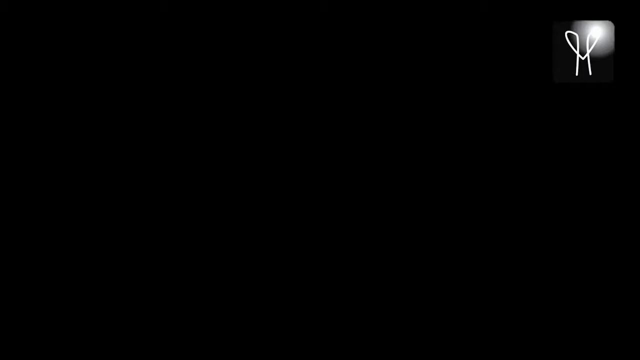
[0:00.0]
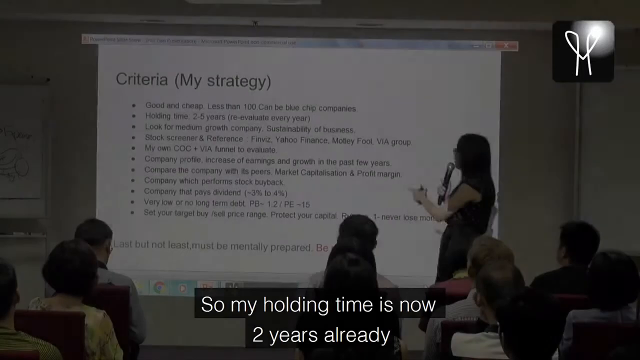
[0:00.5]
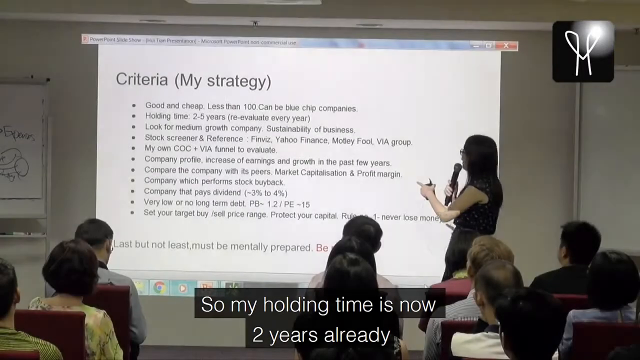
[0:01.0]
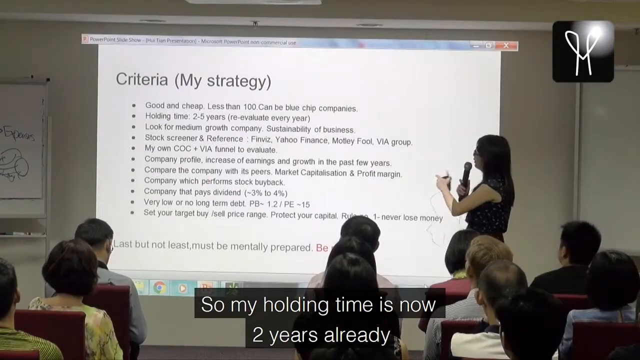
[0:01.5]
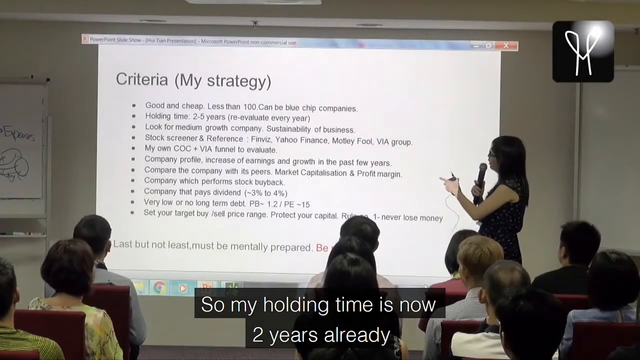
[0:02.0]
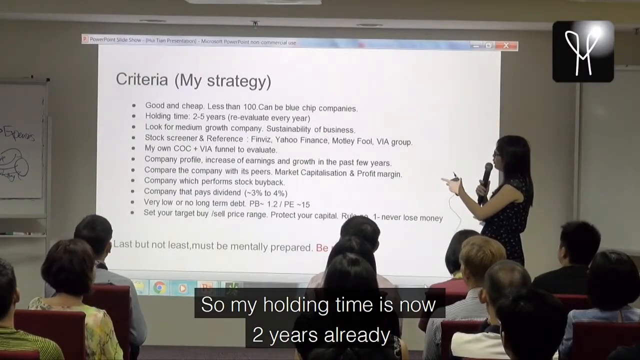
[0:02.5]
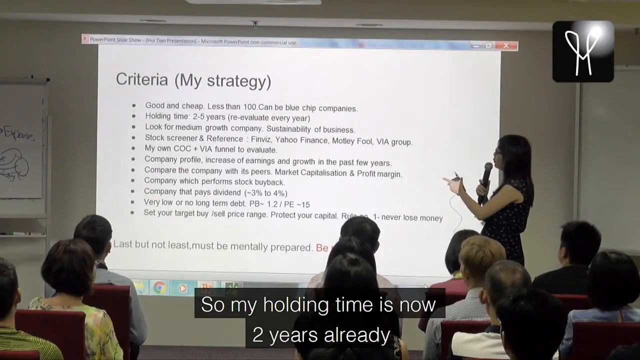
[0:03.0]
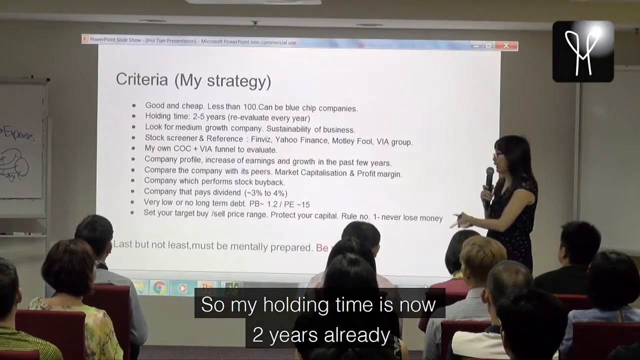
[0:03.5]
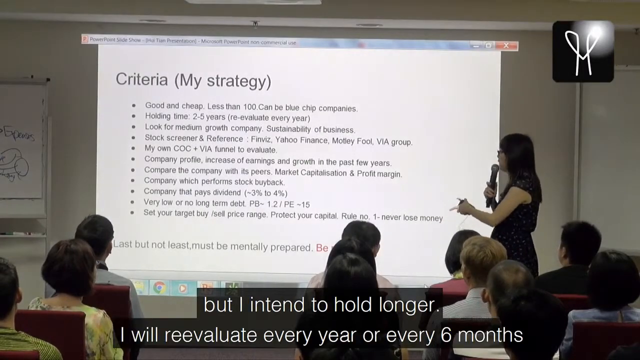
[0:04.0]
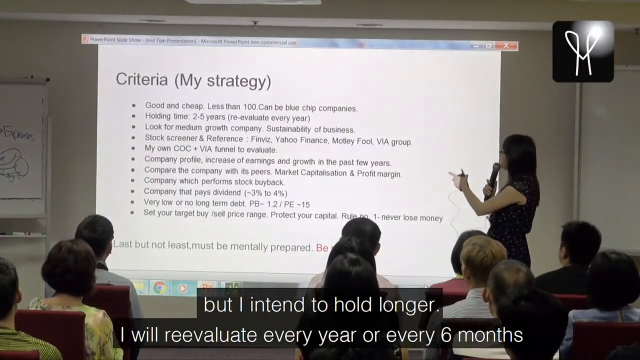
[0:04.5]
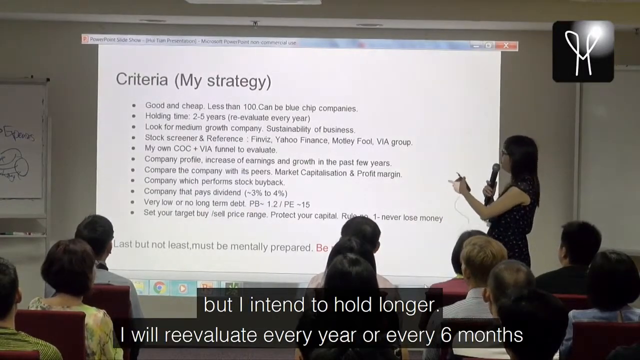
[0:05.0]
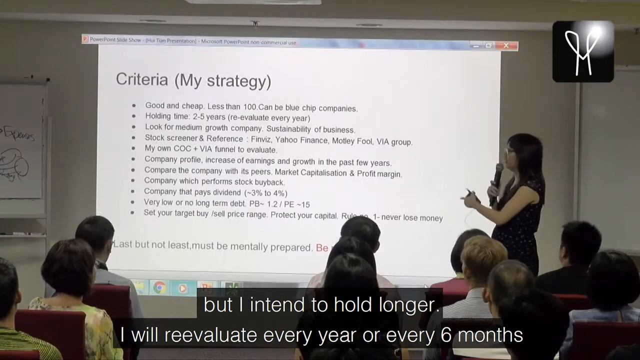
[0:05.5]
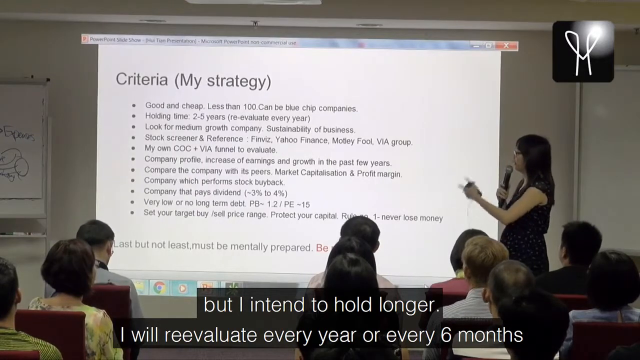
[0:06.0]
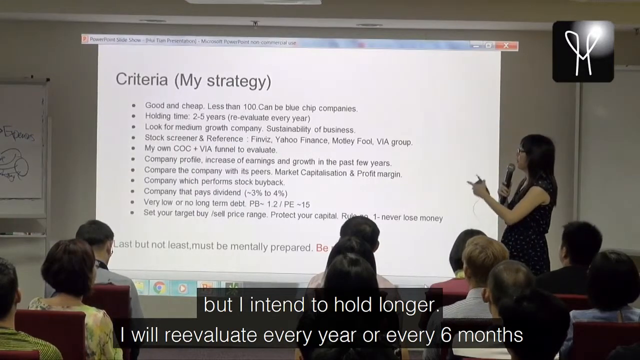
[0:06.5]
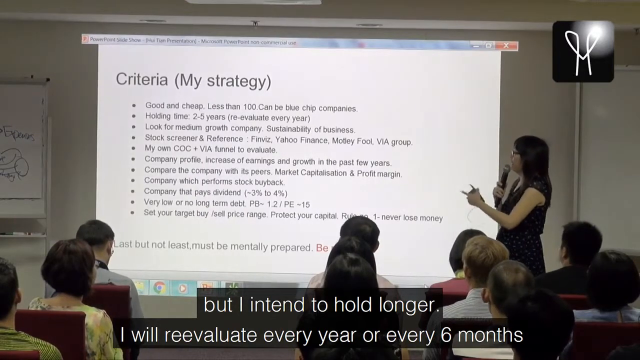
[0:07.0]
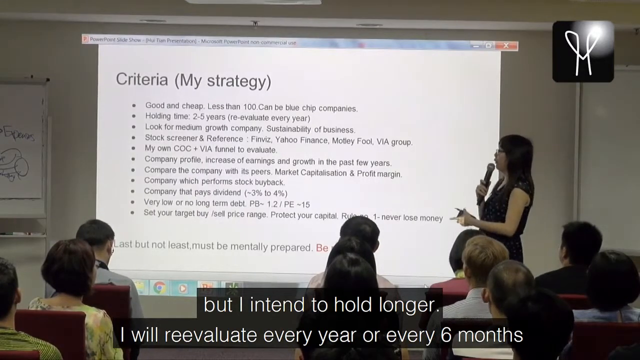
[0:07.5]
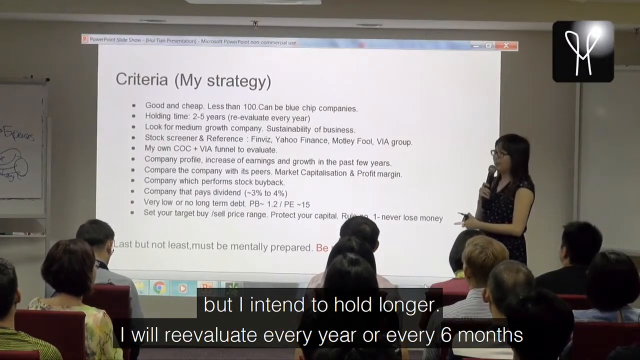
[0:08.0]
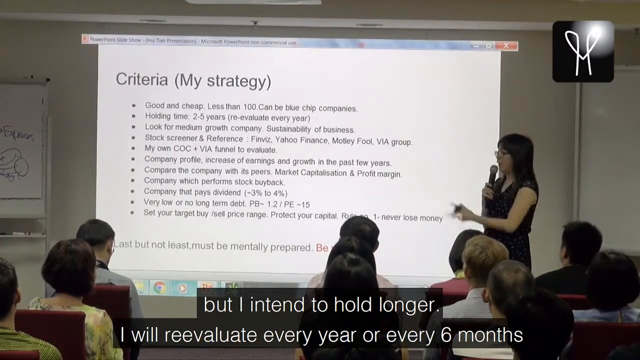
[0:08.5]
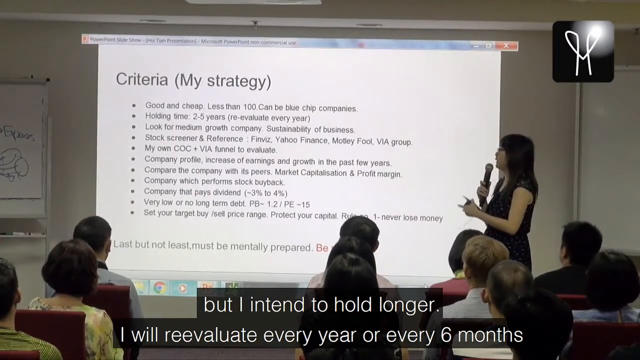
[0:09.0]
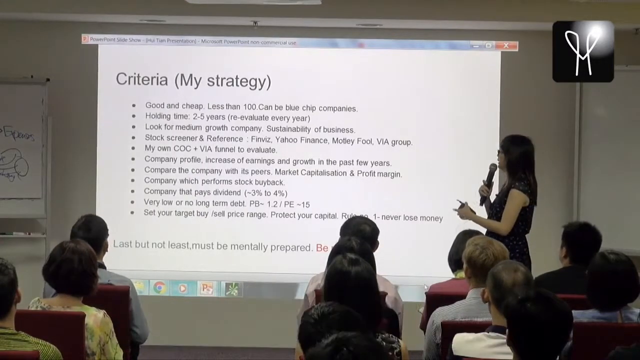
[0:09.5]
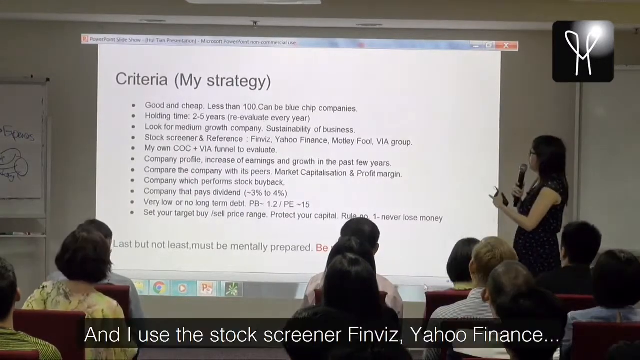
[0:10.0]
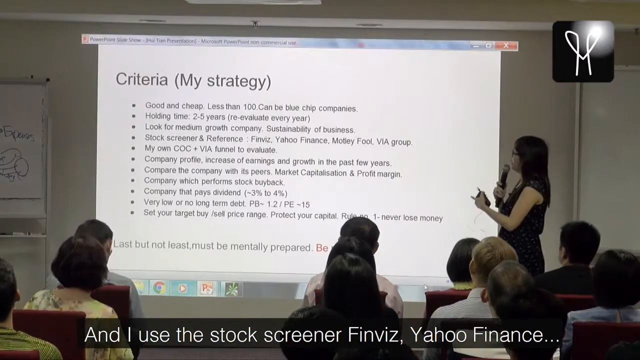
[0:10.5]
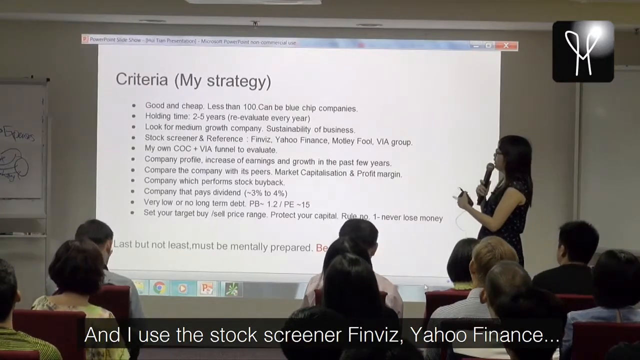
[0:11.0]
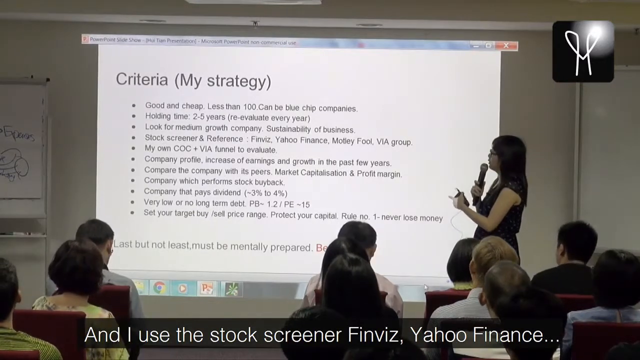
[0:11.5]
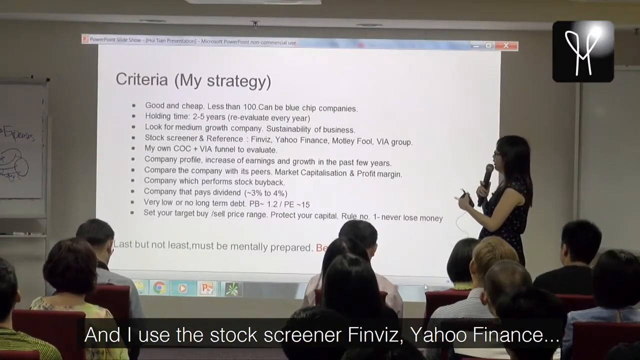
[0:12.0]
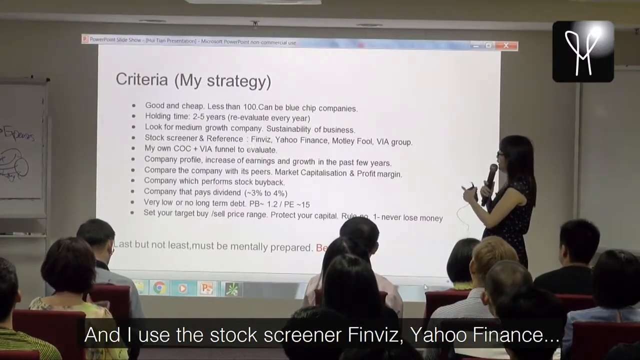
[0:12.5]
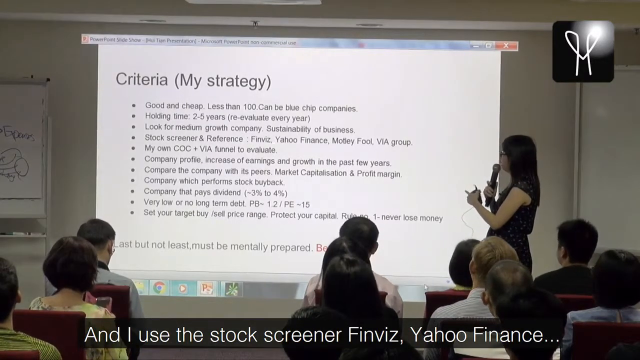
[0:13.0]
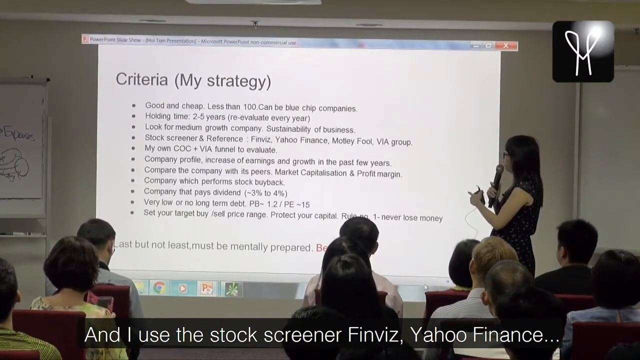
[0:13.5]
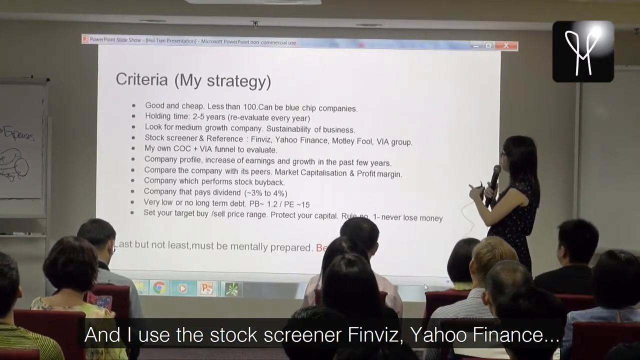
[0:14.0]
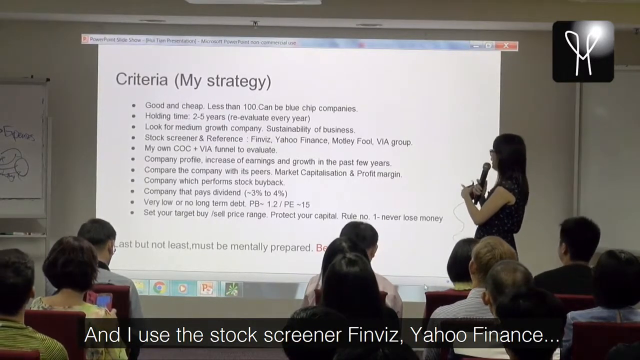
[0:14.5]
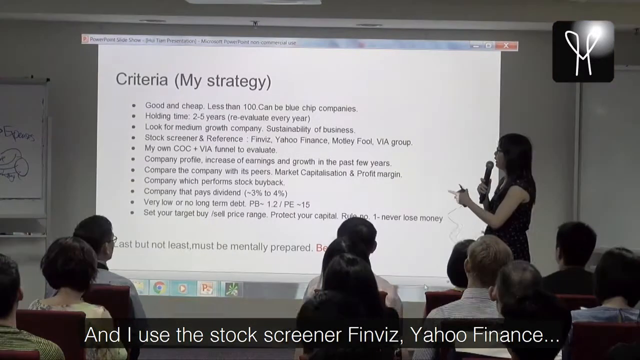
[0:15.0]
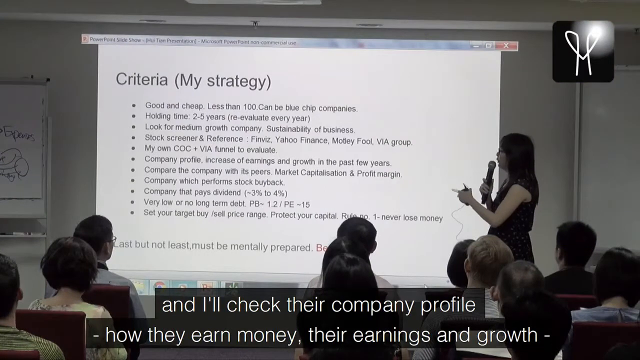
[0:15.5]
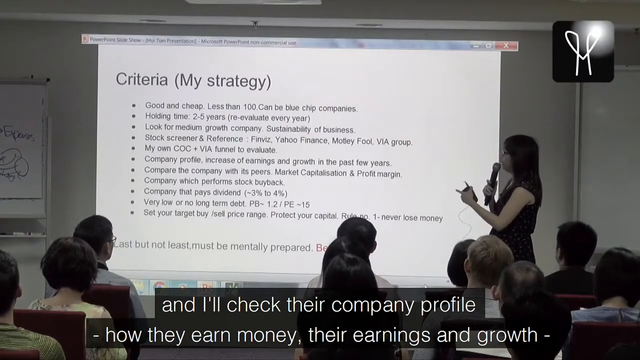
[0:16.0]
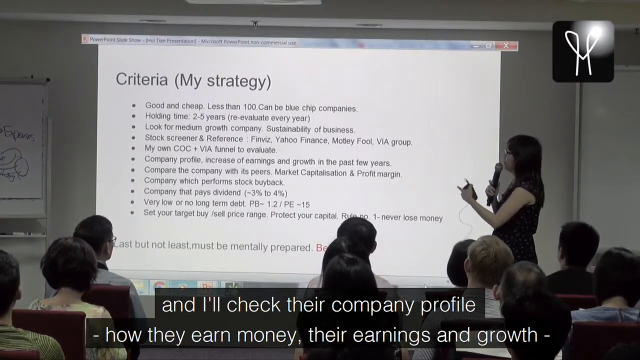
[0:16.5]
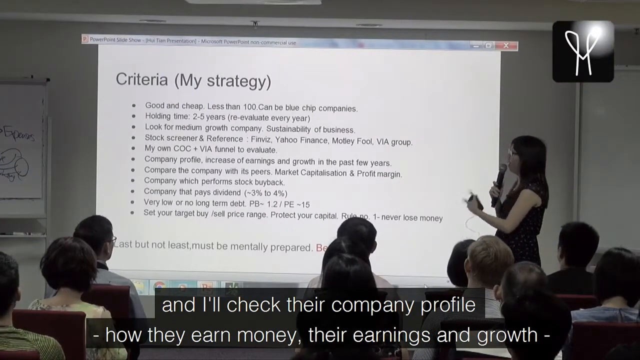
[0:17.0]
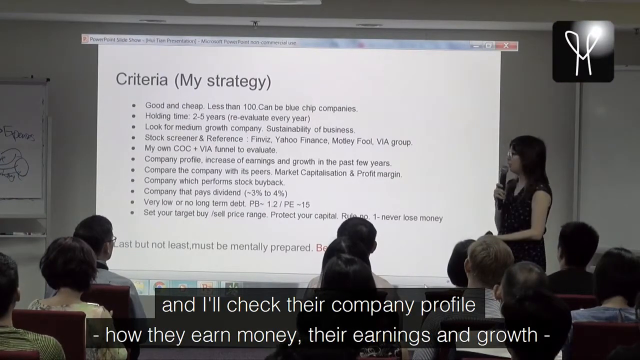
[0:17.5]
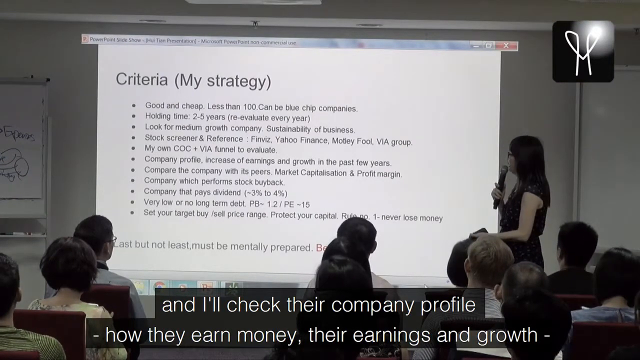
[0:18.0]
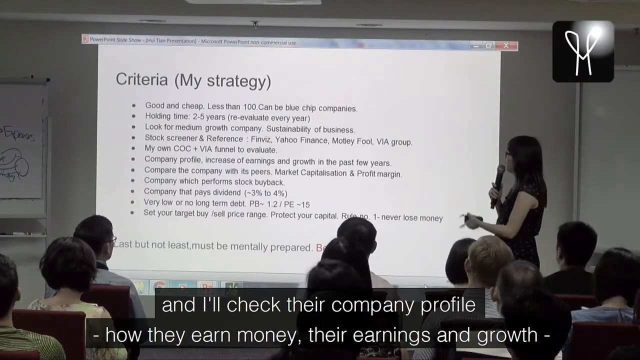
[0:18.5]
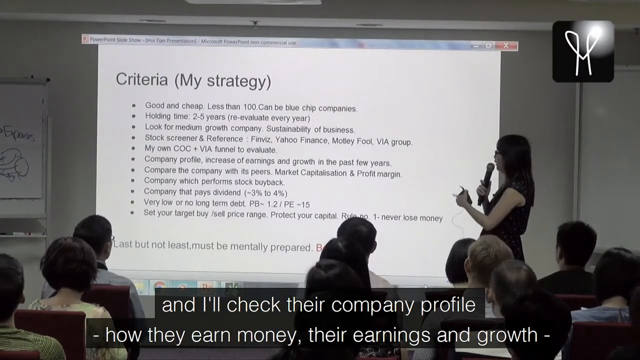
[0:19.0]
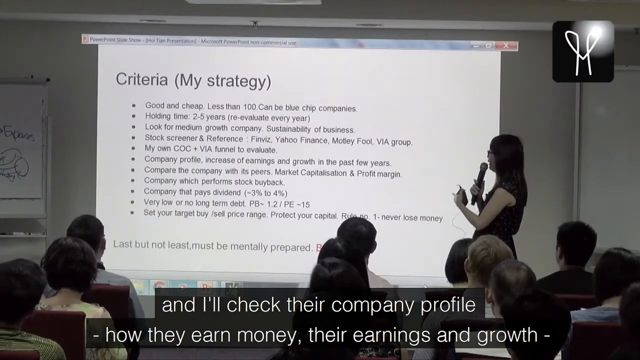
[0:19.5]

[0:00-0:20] A woman shows what seems to be a PowerPoint presentation projected on a white wall. It has the title "Criteria", and under it, in parentheses, "My Strategy". Below that, she outlines a dozen points in bullet points. Further below is the text "Last but Not Least Must Be Mentally Prepared", followed by a few other words blocked by a person. To the left of the presentation there is a whiteboard with something written or drawn on it. An audience of a dozen people, all adults, is present. The presenter is a white woman who seems to be around 40 years old, with straight hair at her shoulders, maybe a little below. She wears glasses with black frames and holds a wireless microphone in her right hand, and on her left hand there is what seems to be a wireless transmitter.